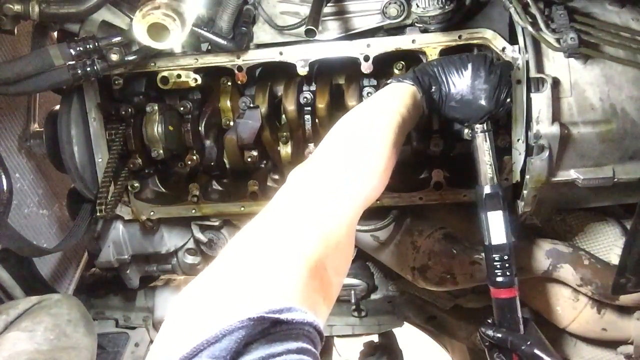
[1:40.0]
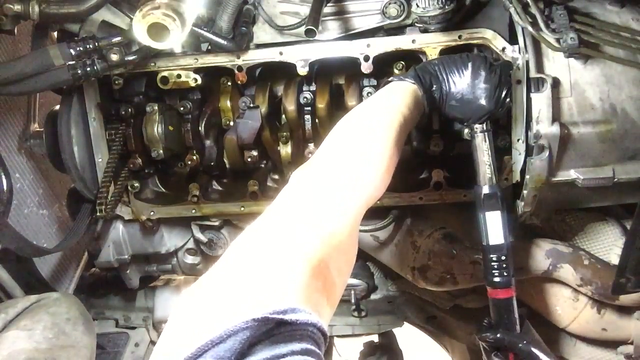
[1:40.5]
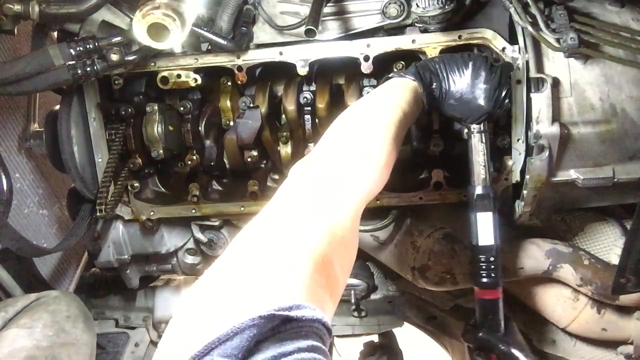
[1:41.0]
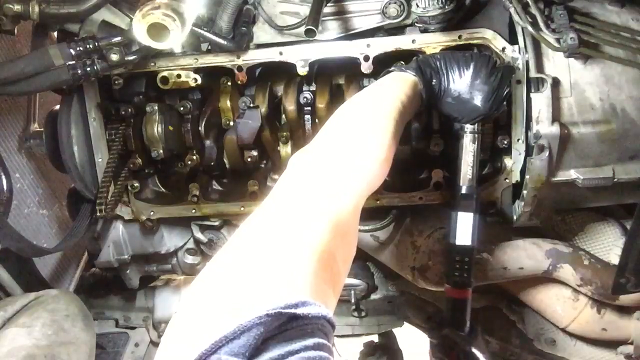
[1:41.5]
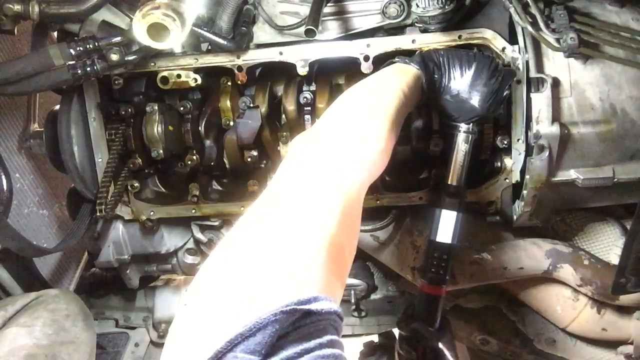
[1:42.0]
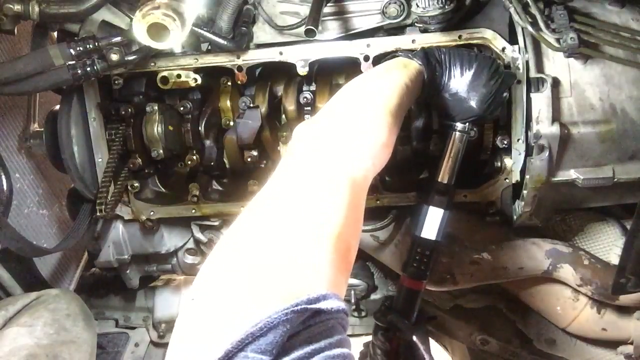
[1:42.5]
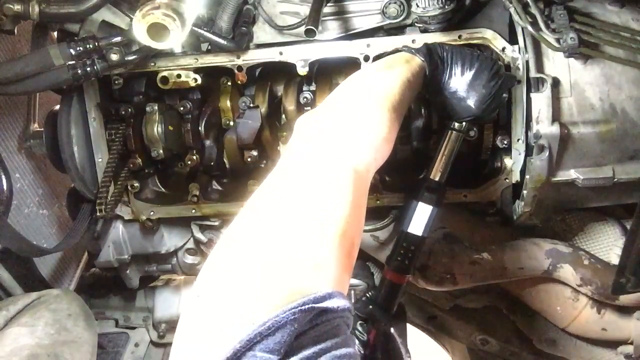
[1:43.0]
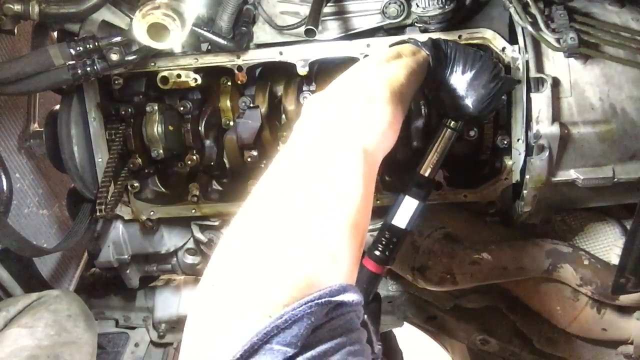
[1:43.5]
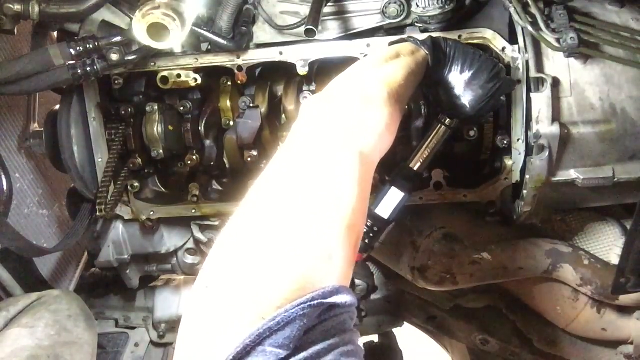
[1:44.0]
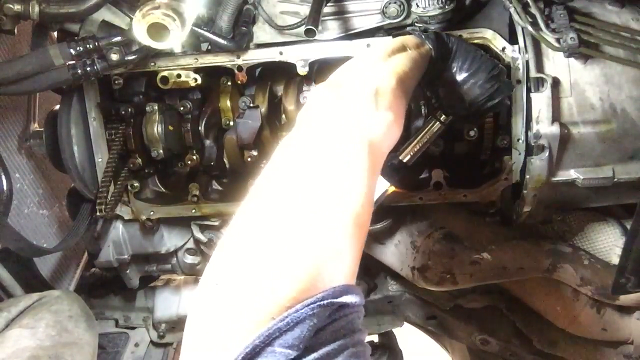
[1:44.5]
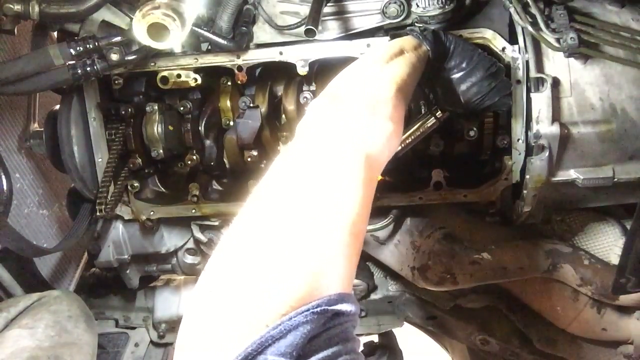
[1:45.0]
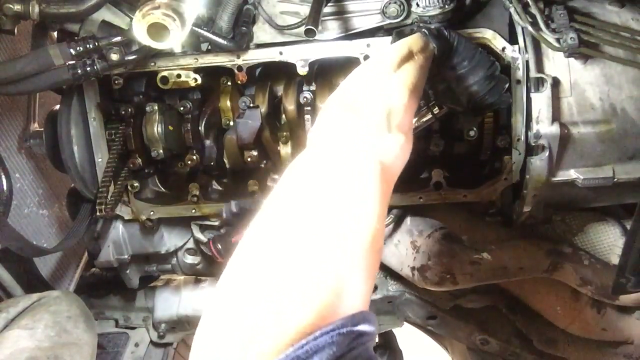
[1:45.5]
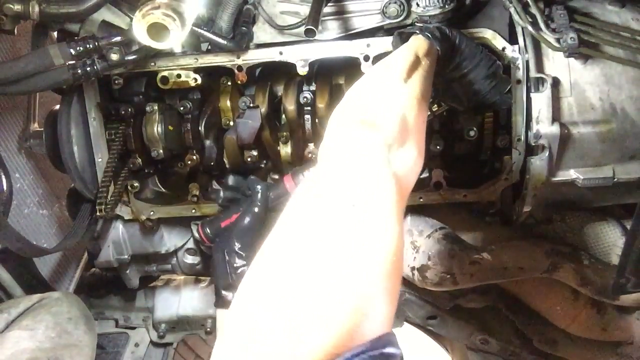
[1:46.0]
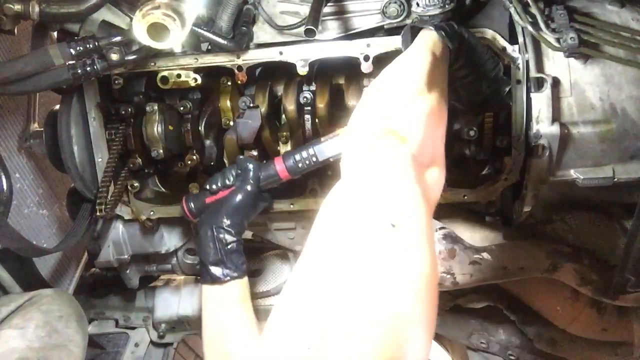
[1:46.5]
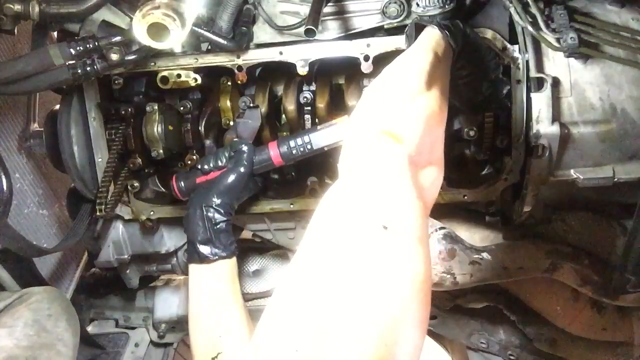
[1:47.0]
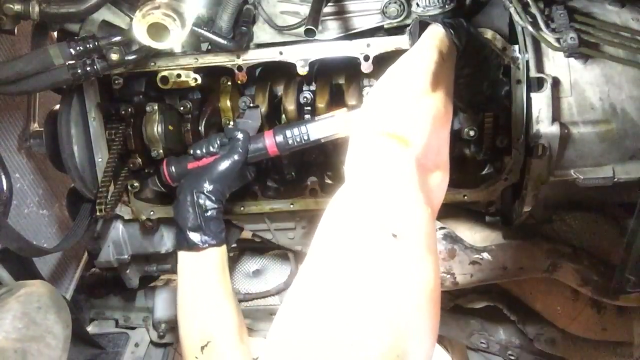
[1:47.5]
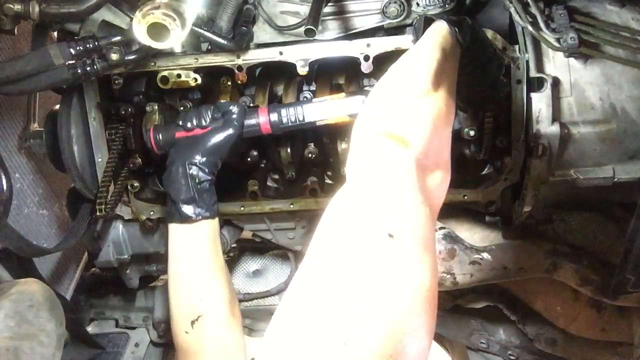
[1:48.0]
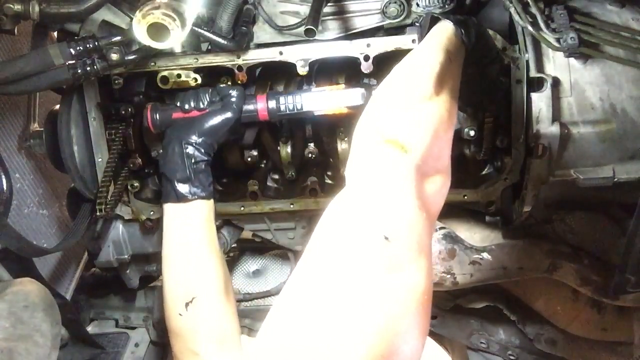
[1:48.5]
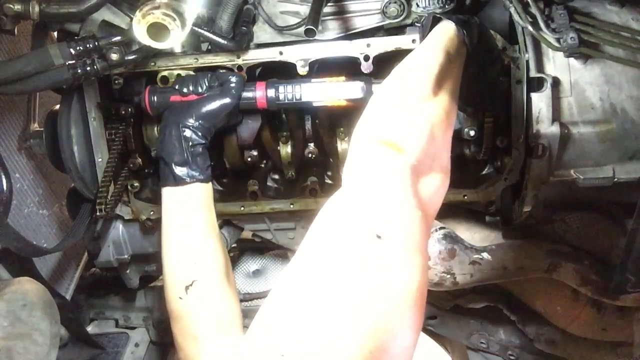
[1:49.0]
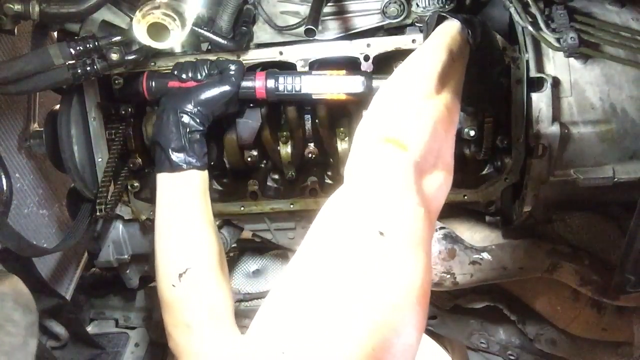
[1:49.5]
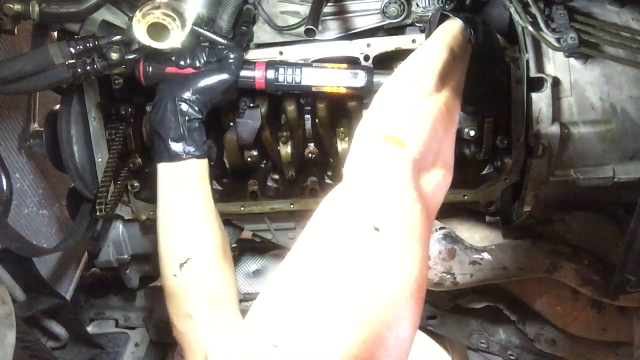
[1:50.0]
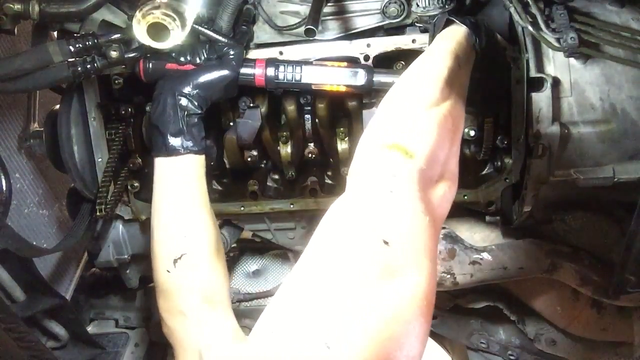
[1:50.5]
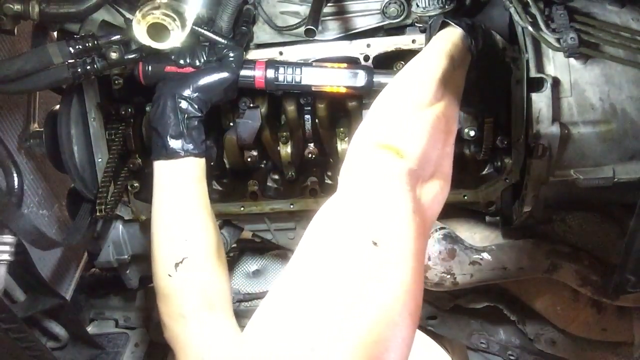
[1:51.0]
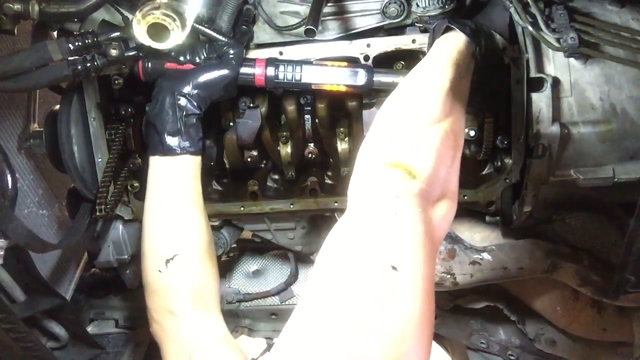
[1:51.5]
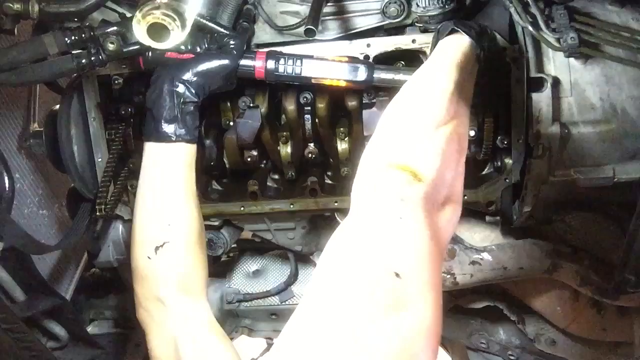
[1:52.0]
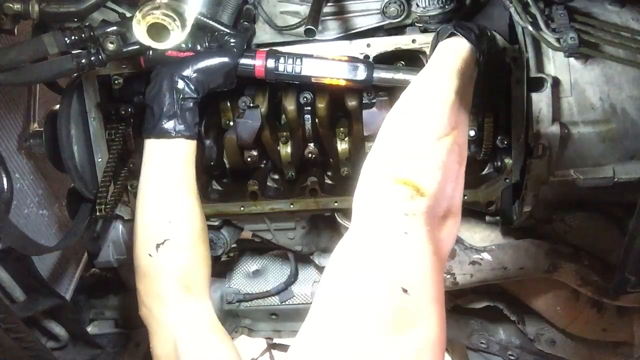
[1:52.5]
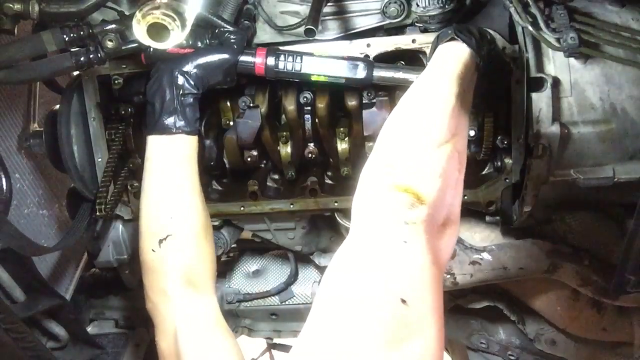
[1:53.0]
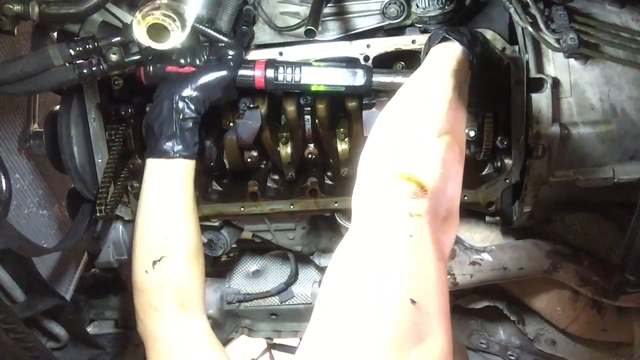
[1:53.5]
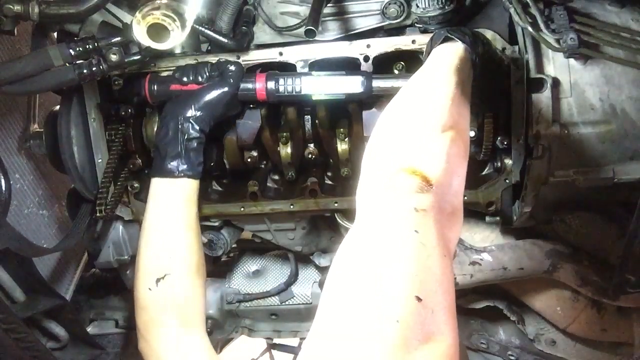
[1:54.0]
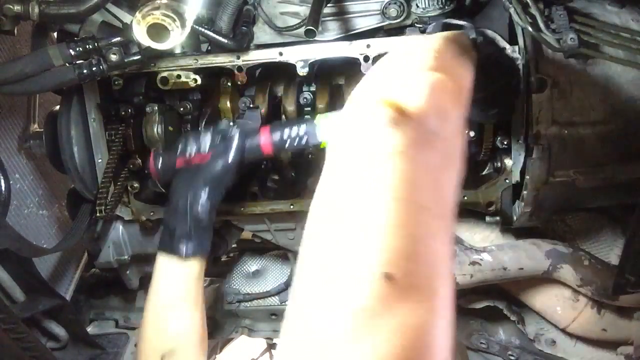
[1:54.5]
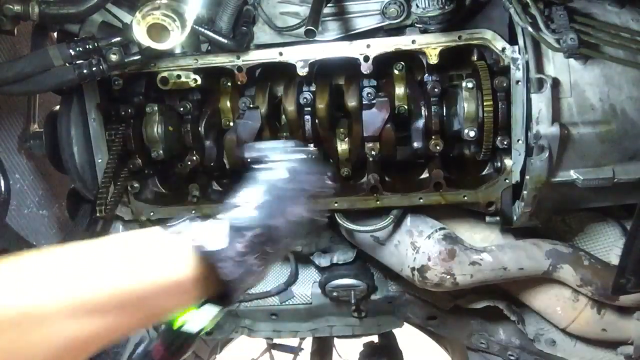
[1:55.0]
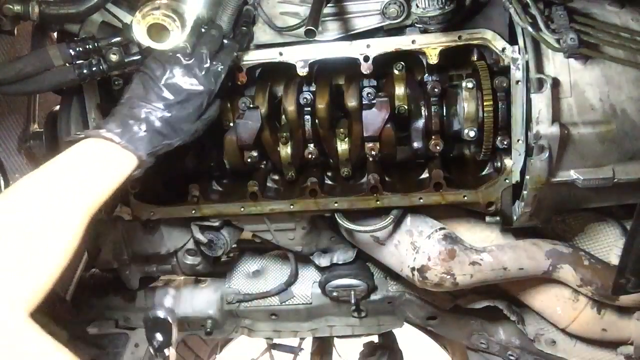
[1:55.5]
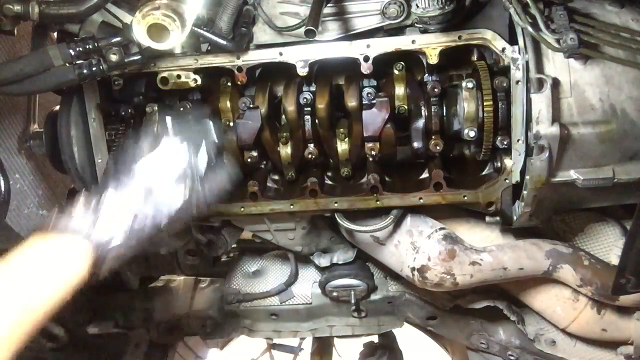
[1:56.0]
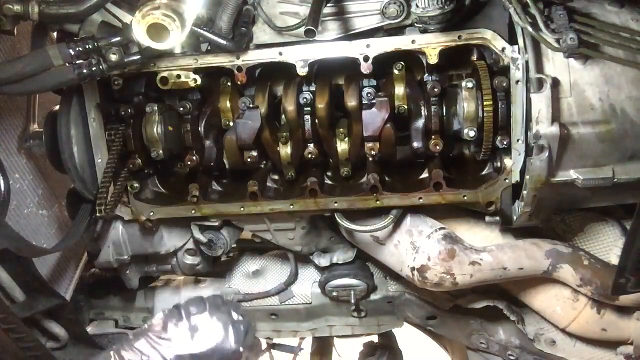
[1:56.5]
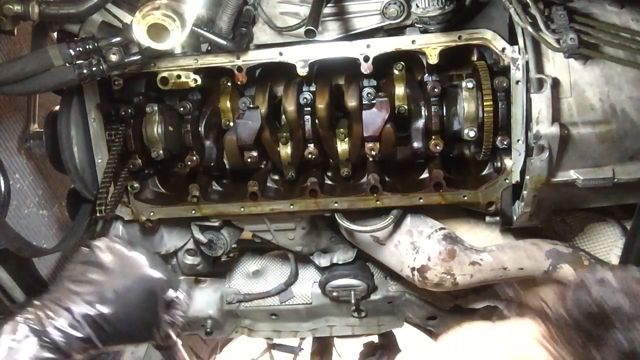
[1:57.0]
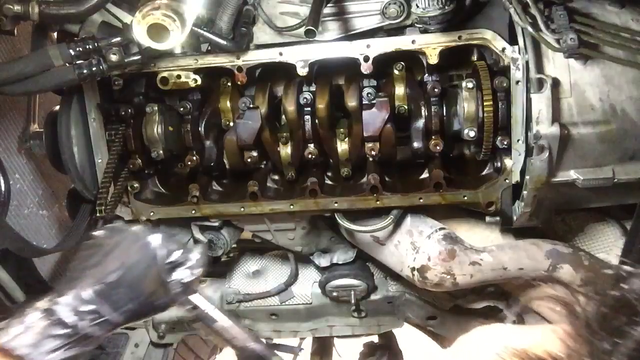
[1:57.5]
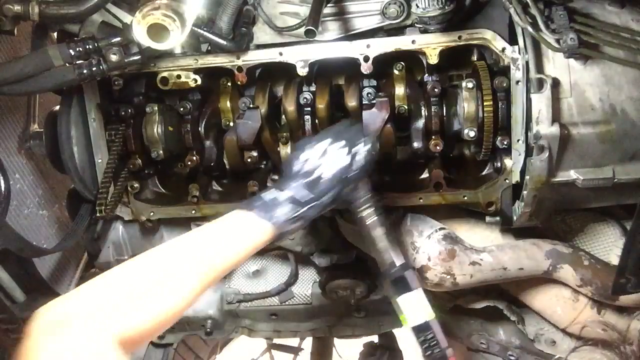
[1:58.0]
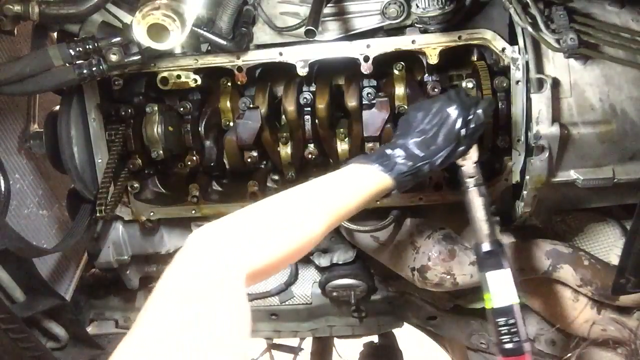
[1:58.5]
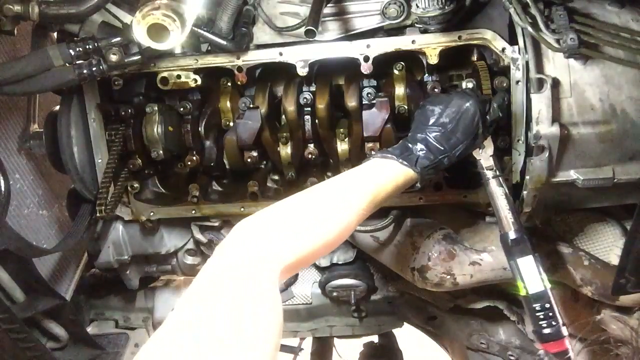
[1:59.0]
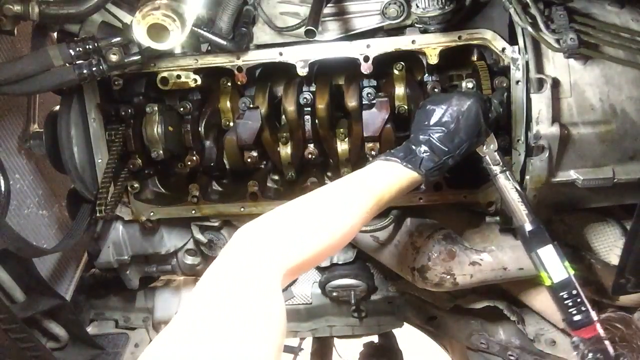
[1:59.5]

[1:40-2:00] The person rotates the device clockwise with their left arm fully extended, holding the piece of the device attached to the engine, and their right hand on the part of the device with the red ring. The rotation looks like it requires a lot of effort; both arms are working and appear to be shaking from the effort. They rotate it as far as it can go toward the upper left of the image, apparently about a quarter turn in total. They then release the device from the engine, and the whole metallic engine-looking device is visible with nothing blocking the frame. Toward the end, the person goes back to attach the same device onto the engine in a similar spot.